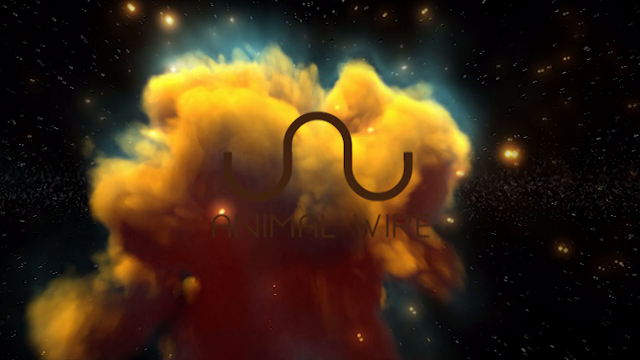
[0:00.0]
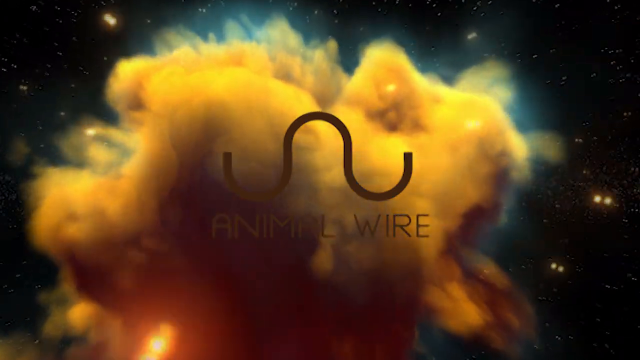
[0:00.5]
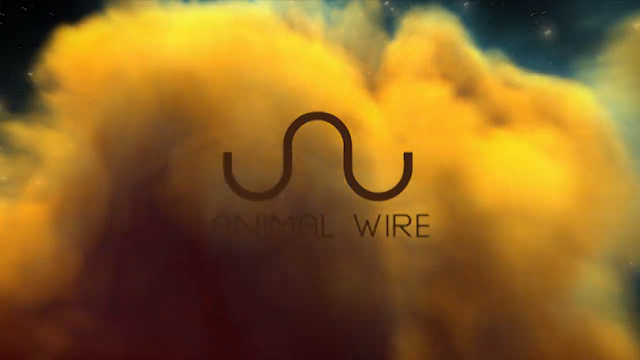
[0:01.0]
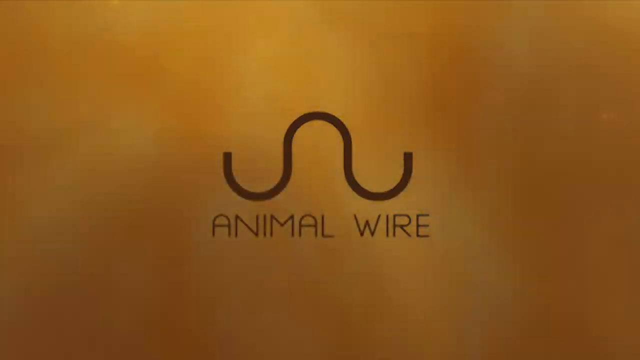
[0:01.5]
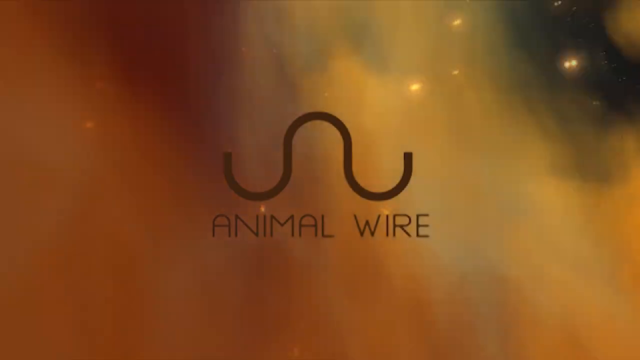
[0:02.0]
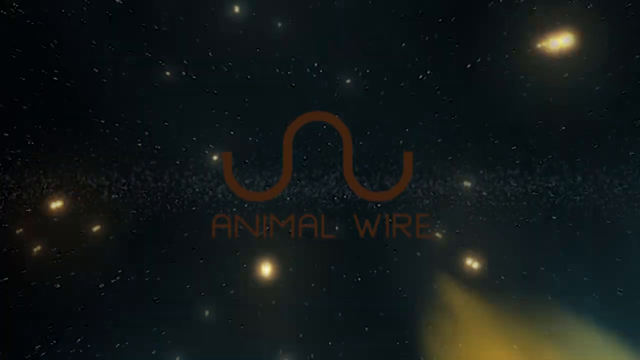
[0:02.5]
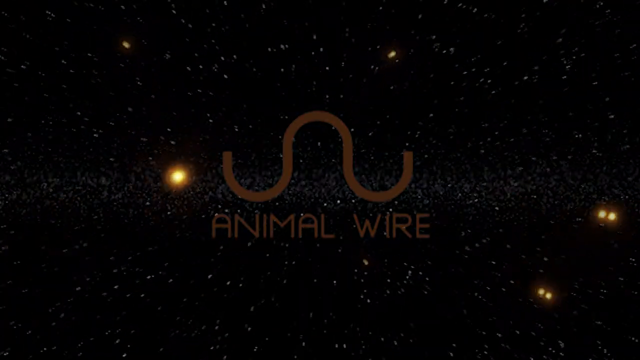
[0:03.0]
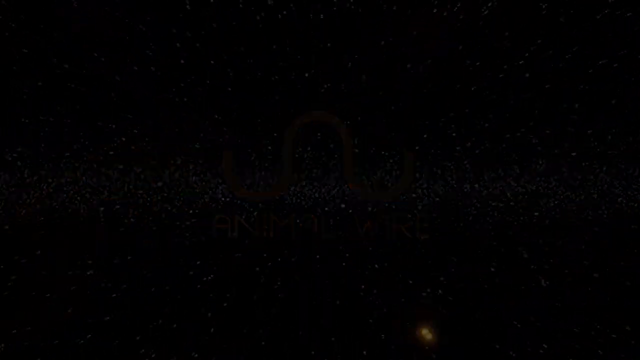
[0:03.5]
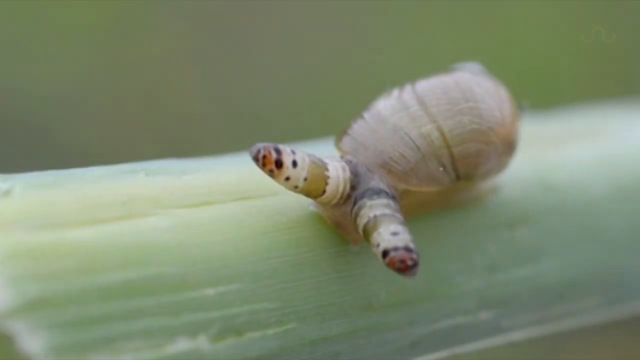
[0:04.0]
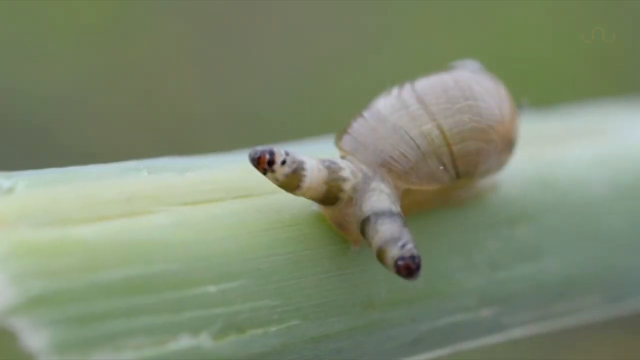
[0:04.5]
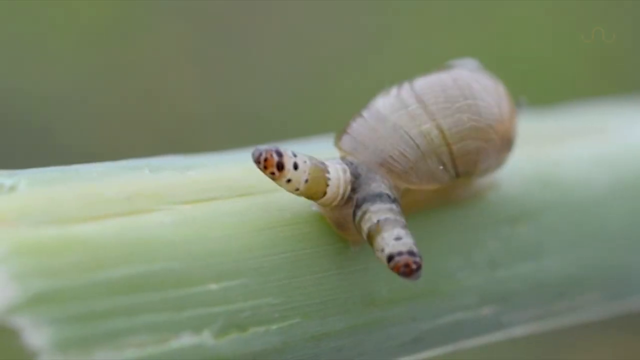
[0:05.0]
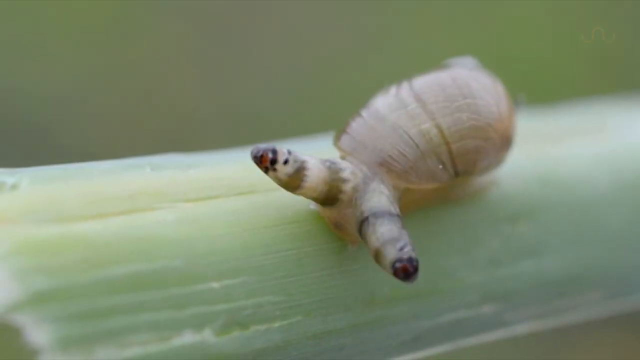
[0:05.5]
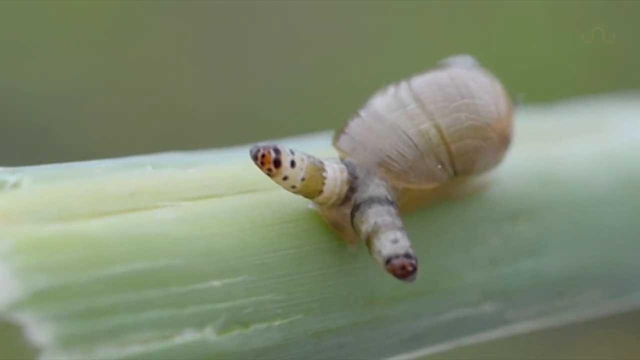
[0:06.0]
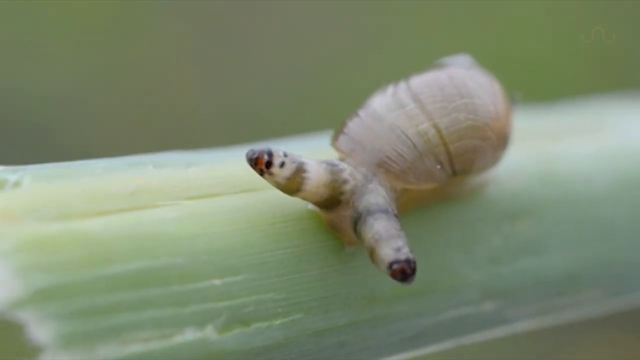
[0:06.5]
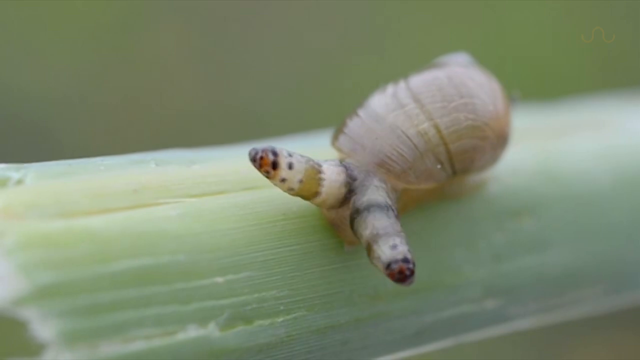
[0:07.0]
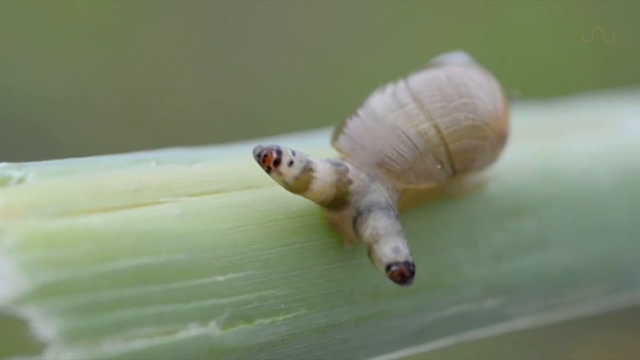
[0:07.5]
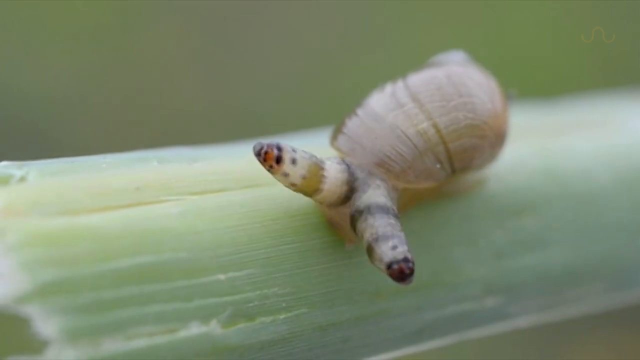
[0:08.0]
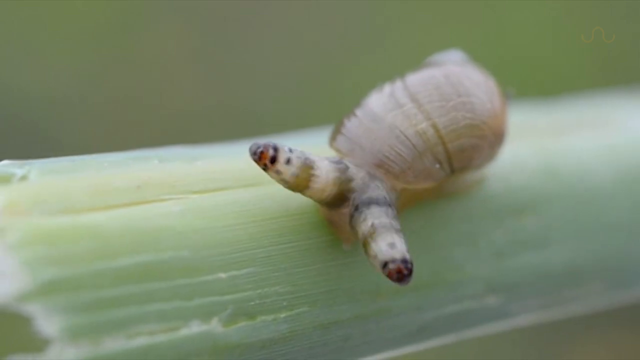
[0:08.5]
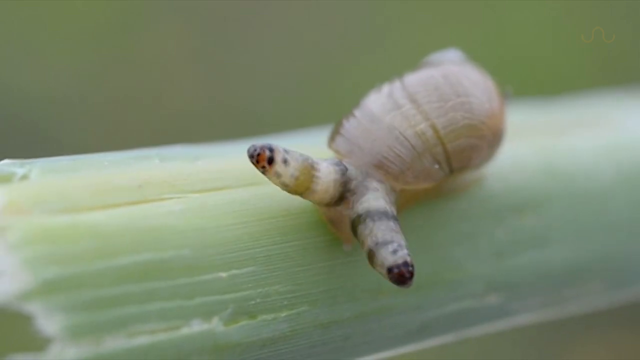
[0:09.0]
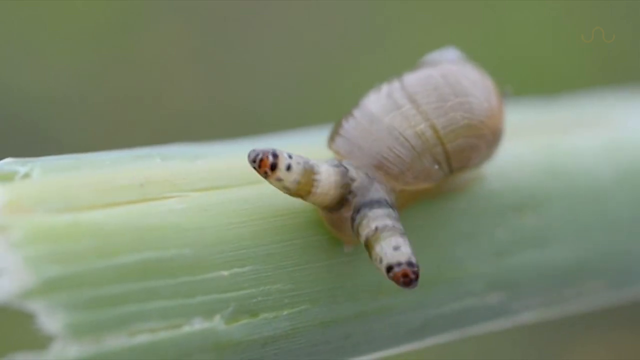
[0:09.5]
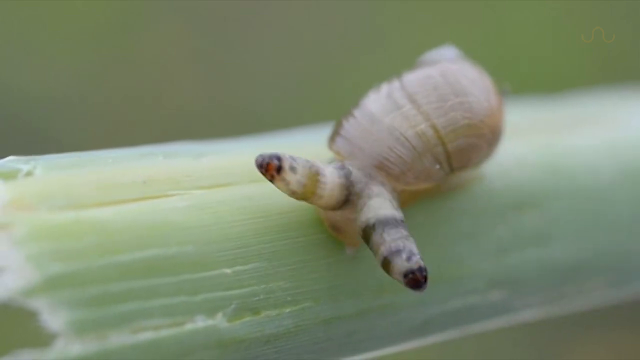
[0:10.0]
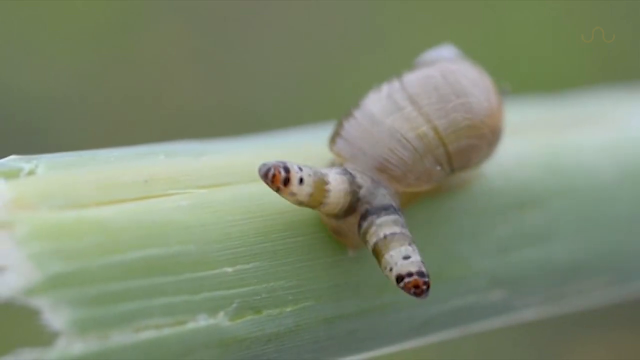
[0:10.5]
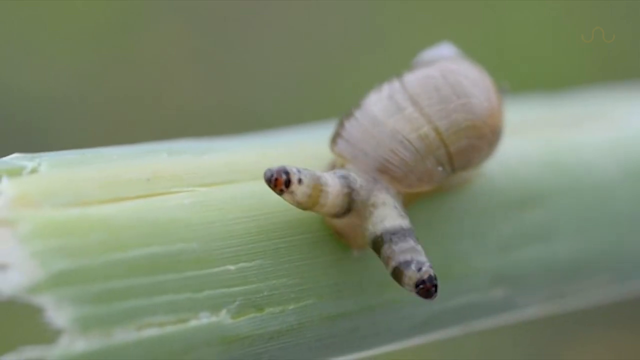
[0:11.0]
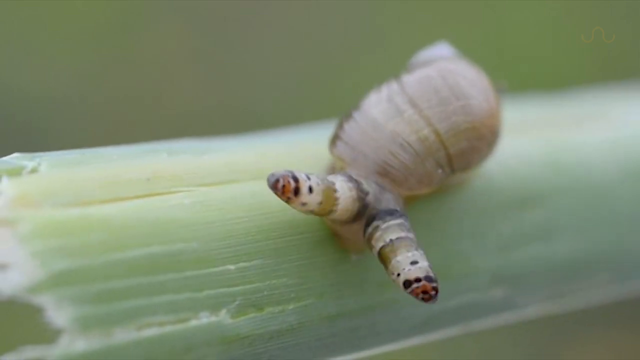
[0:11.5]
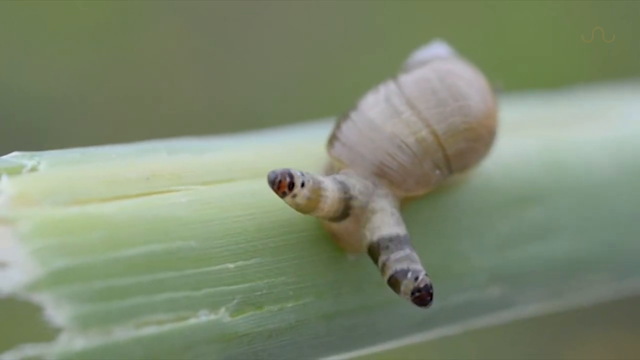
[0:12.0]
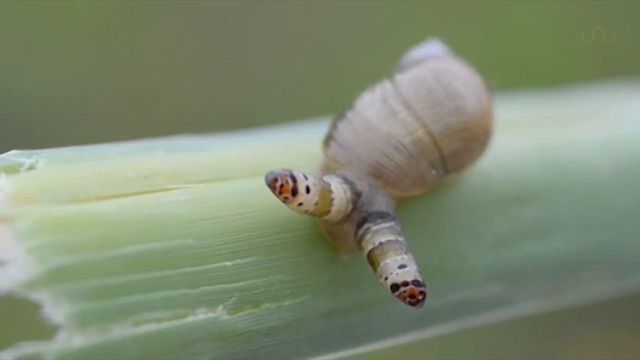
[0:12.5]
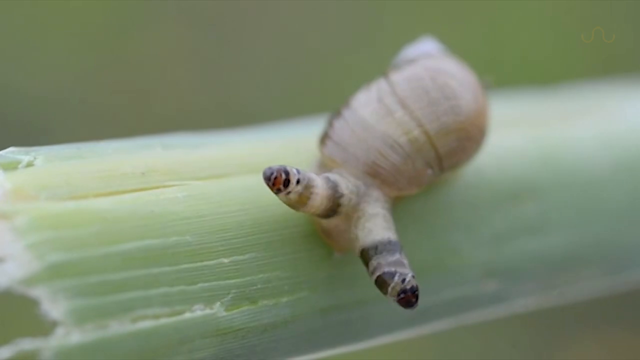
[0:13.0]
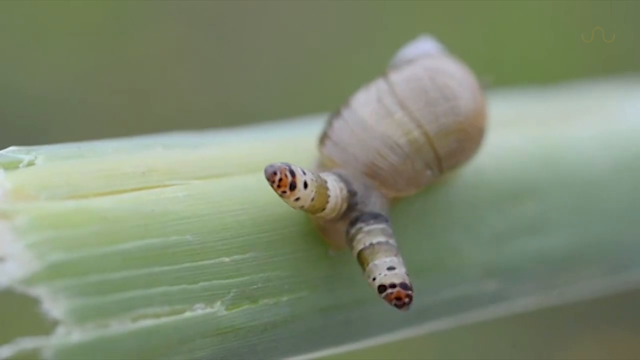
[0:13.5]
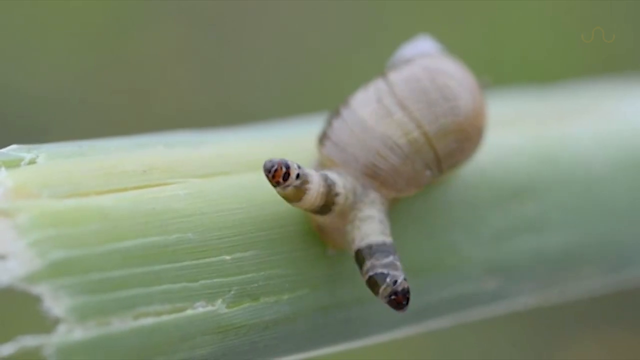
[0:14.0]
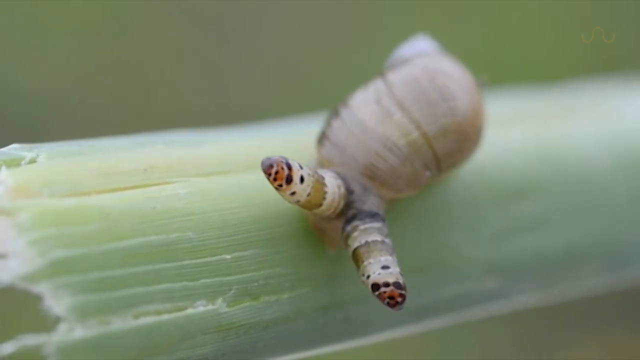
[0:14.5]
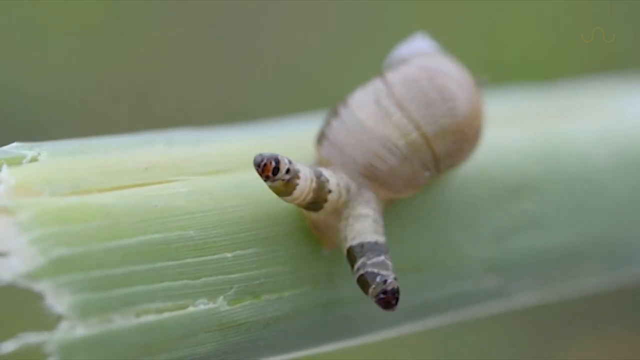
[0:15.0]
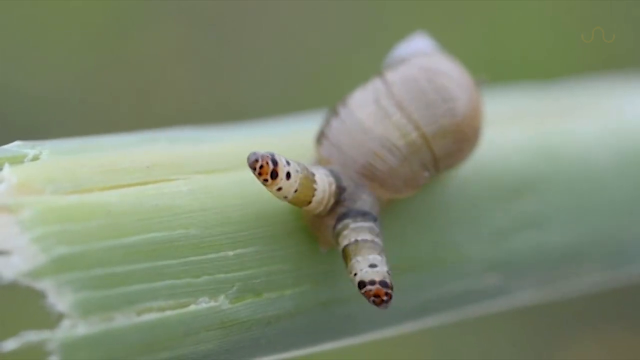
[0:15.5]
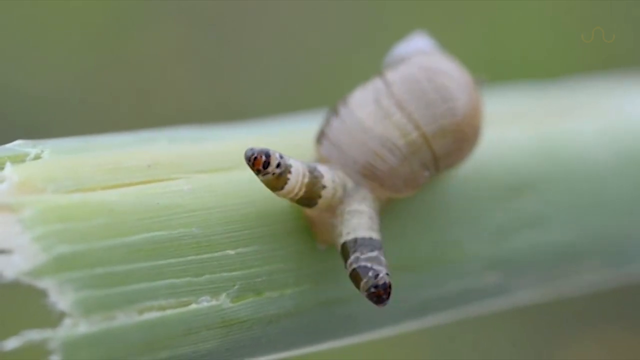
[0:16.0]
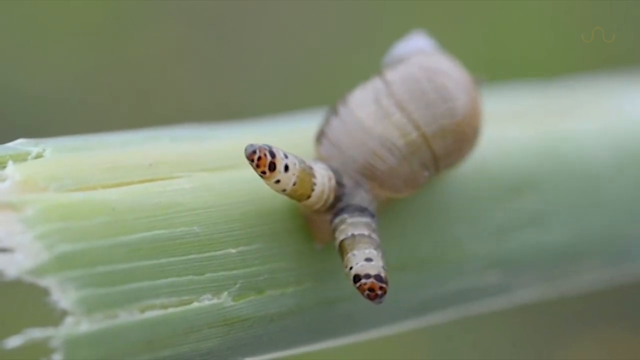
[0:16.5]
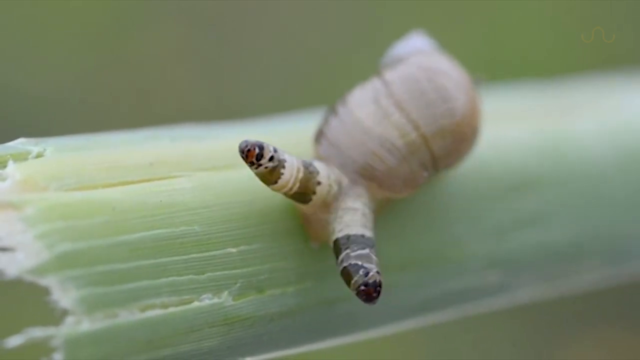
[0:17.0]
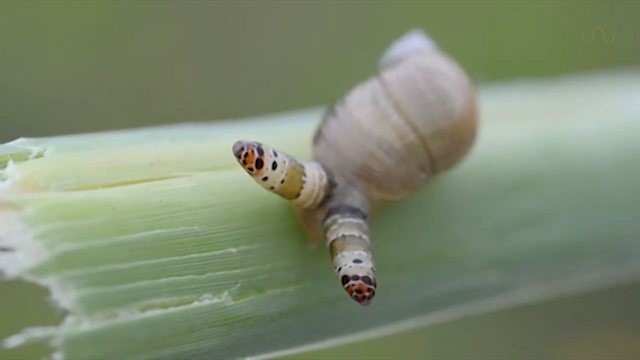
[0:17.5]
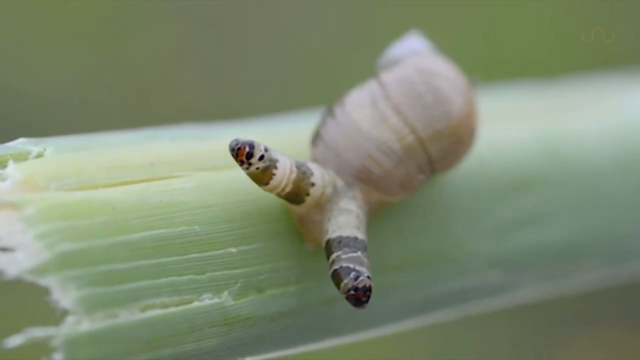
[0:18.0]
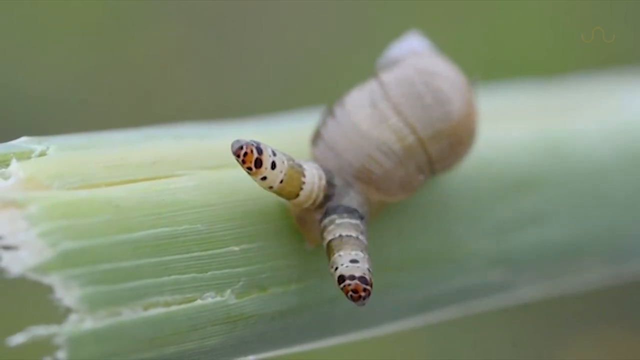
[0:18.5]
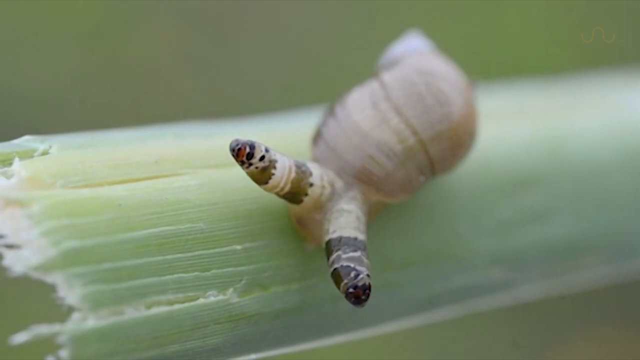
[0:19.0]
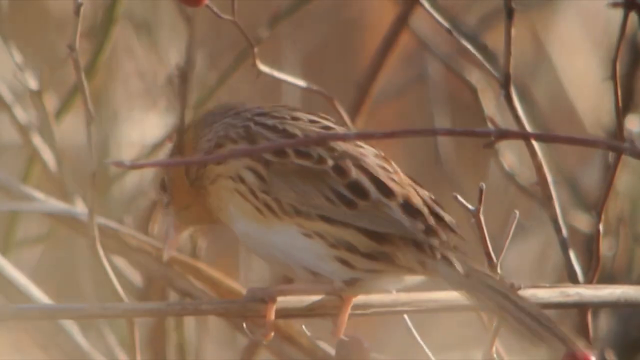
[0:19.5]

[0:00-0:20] The words "animal wire" pop up on the screen, along with what looks like a curve that goes both ways. As the video starts, something like a nebula in outer space is visible in the background. Then a snail-like creature appears, with what almost looks like two antennae that seem to morph into different striped patterns as they move back and forth. Next, a small bird is shown that is sort of yellow with black on it; its wings are beige and brown, it has a little beak, and its orange legs hold it to a branch.